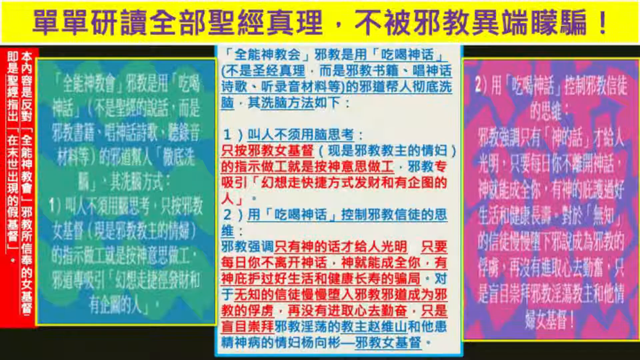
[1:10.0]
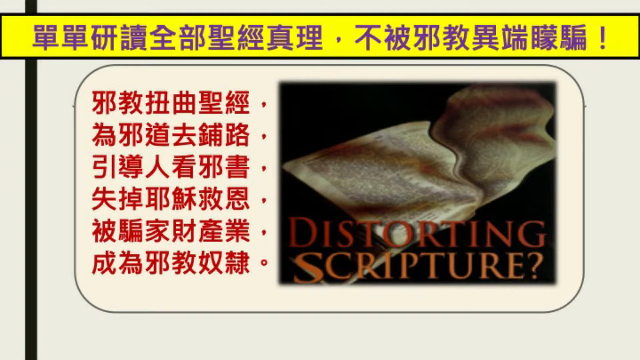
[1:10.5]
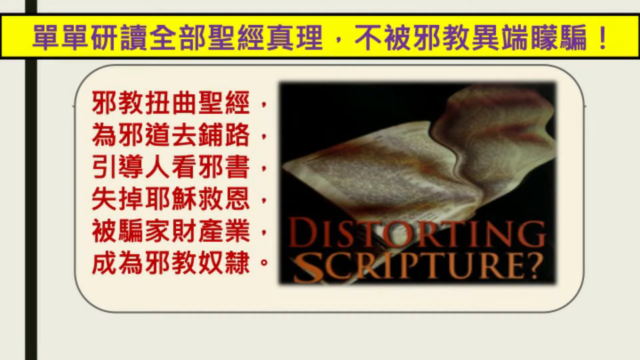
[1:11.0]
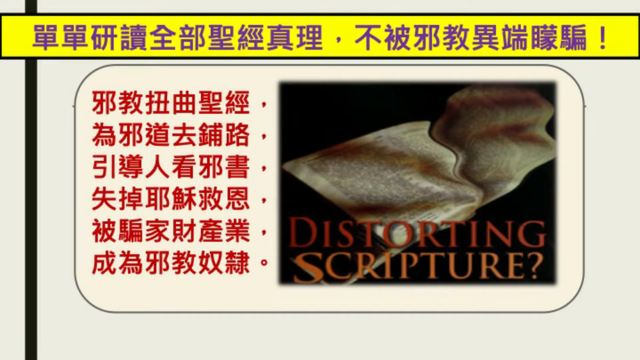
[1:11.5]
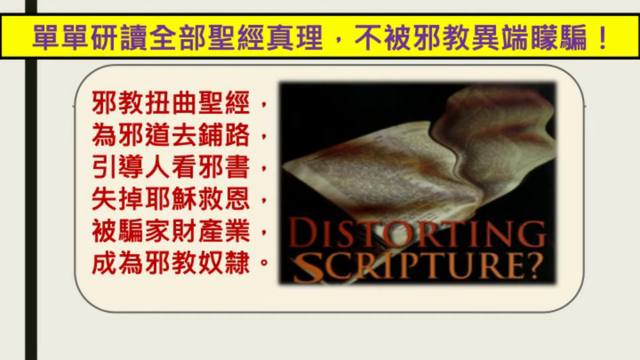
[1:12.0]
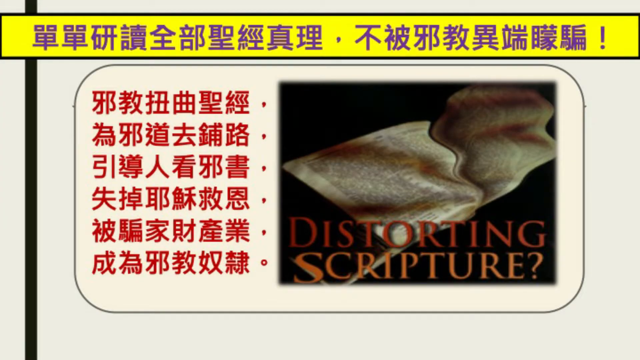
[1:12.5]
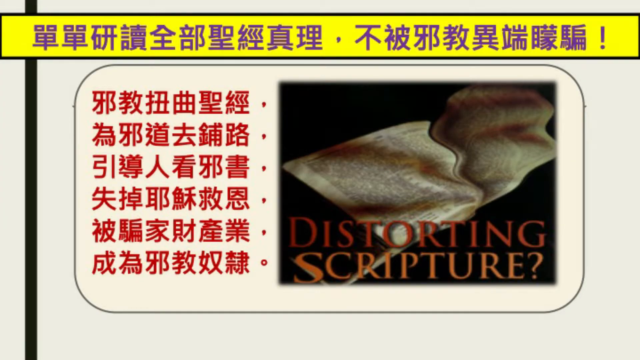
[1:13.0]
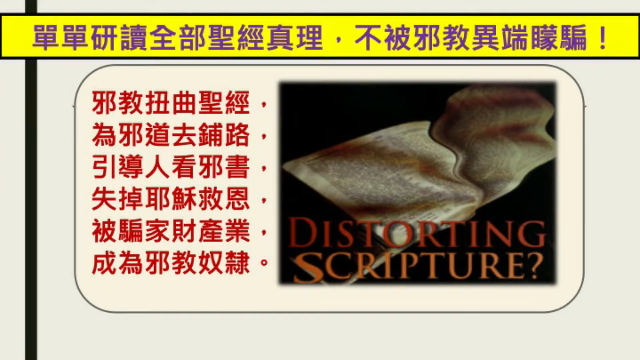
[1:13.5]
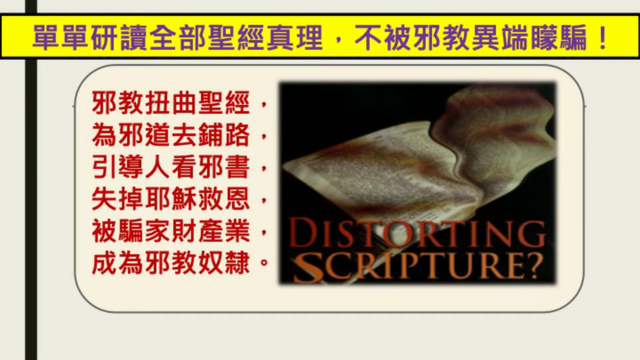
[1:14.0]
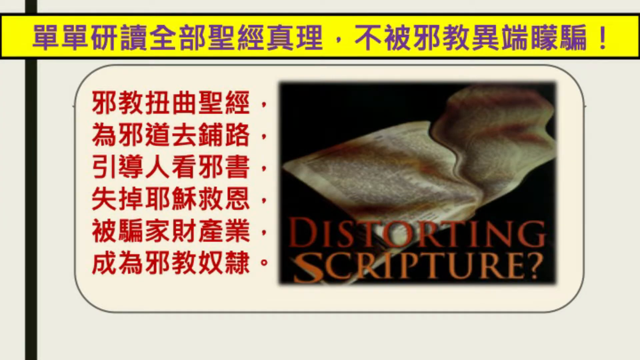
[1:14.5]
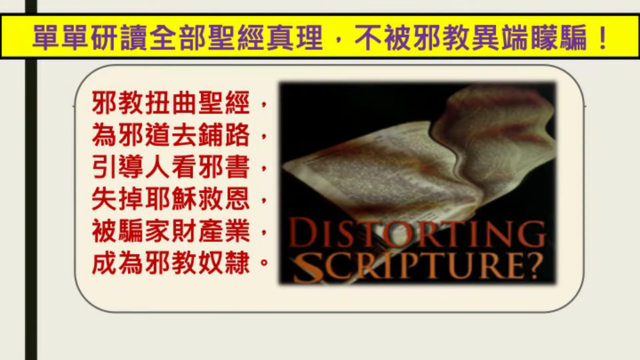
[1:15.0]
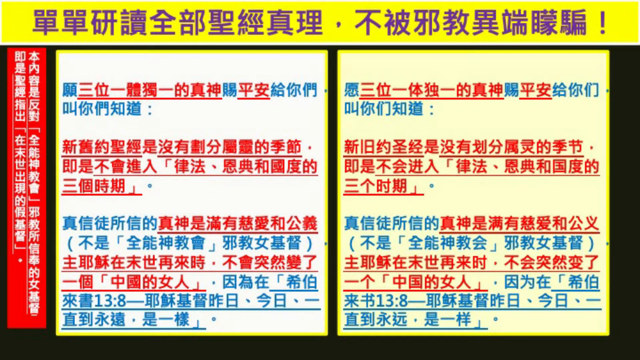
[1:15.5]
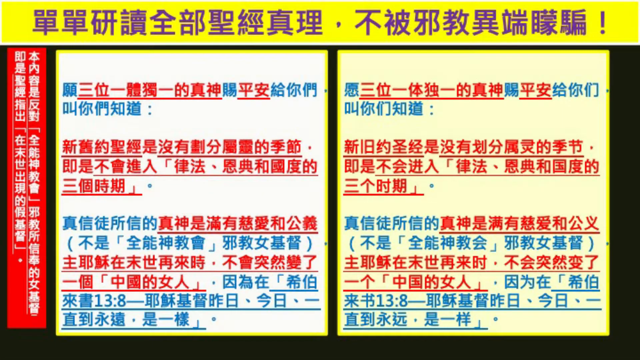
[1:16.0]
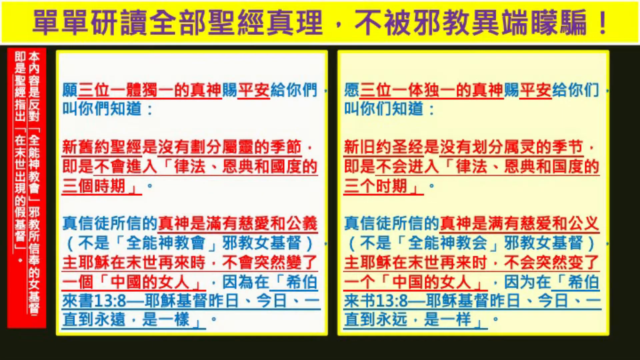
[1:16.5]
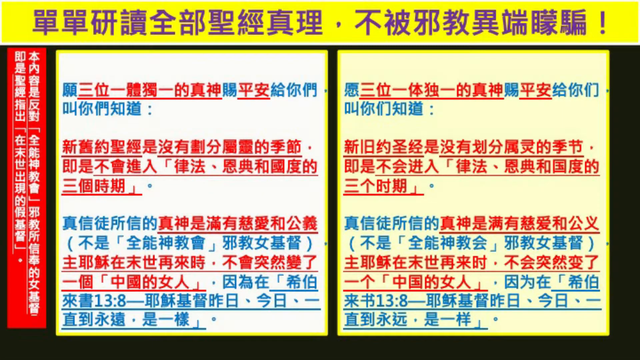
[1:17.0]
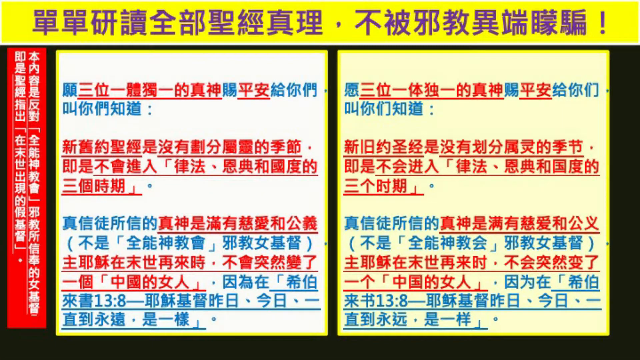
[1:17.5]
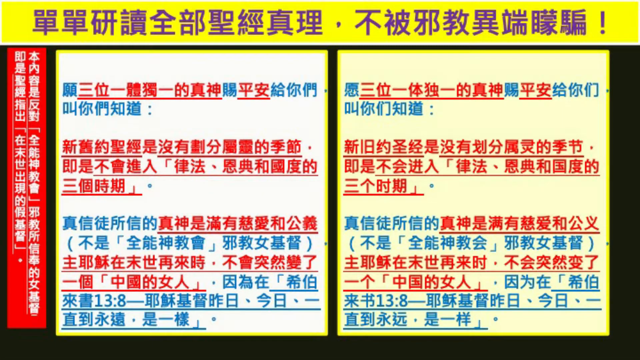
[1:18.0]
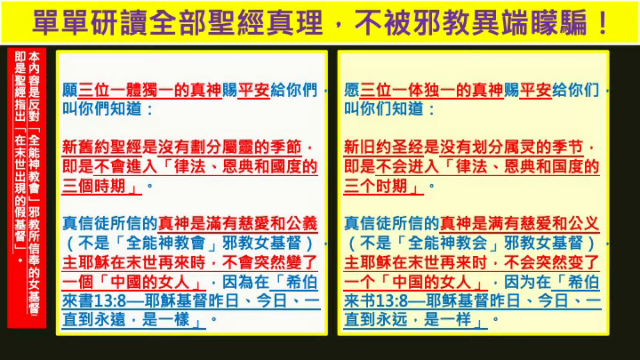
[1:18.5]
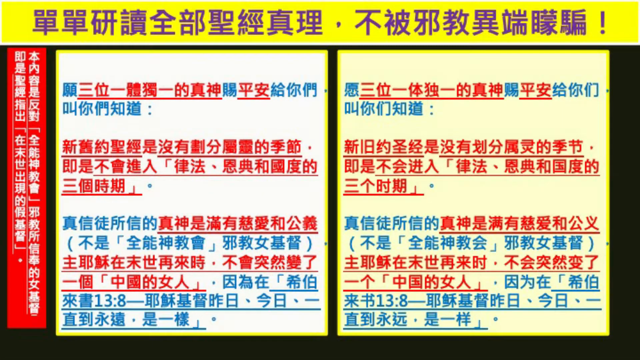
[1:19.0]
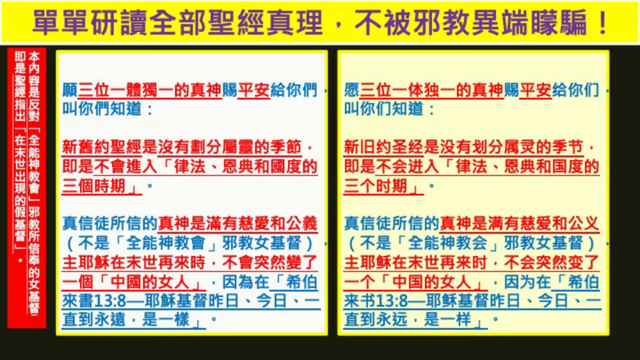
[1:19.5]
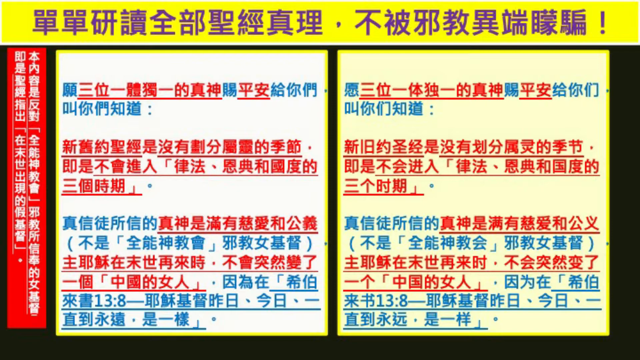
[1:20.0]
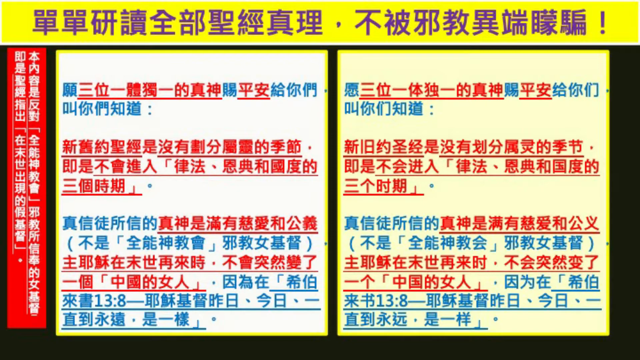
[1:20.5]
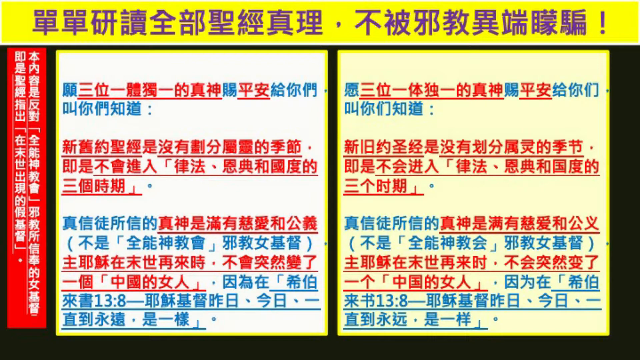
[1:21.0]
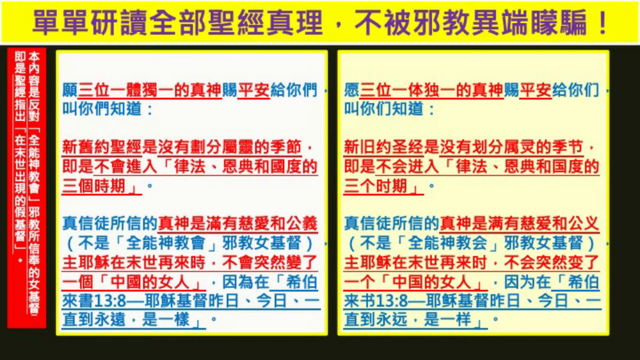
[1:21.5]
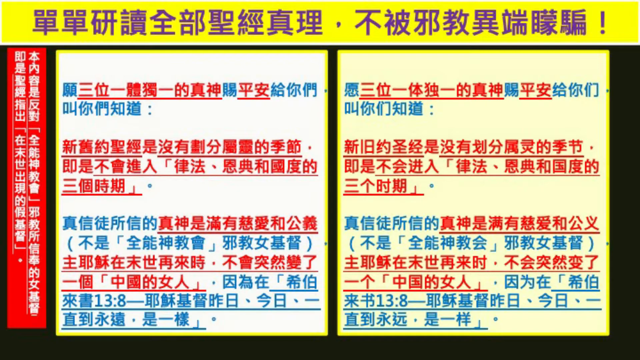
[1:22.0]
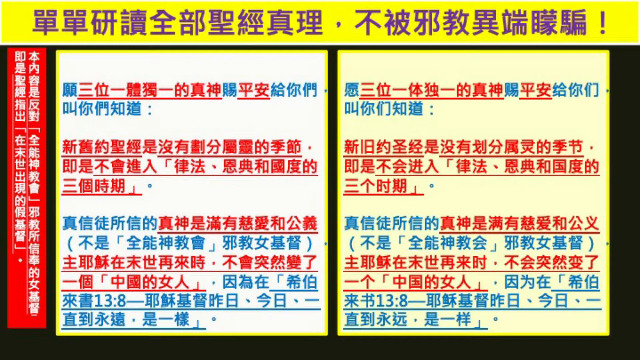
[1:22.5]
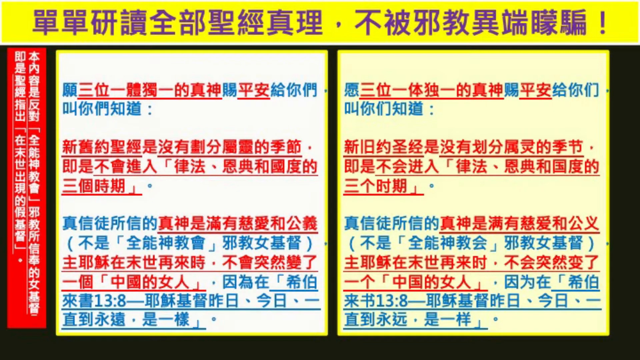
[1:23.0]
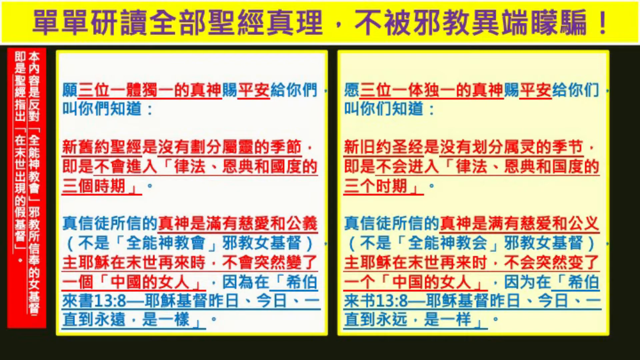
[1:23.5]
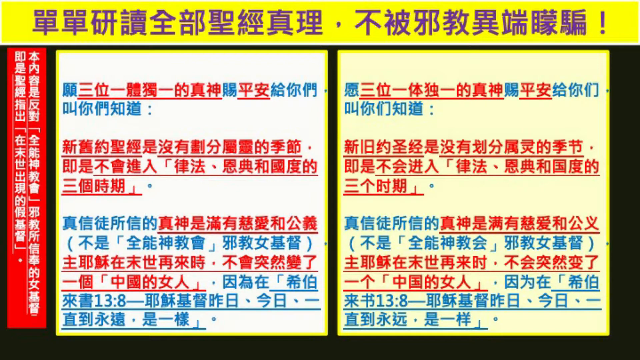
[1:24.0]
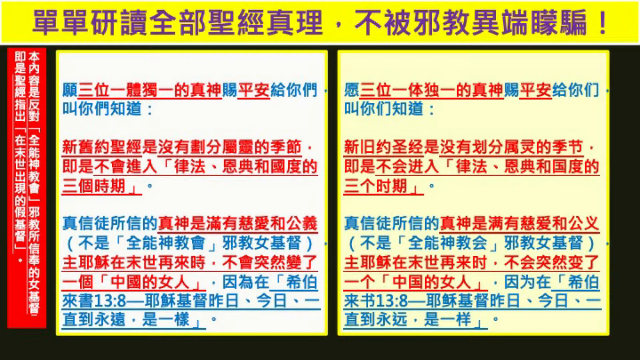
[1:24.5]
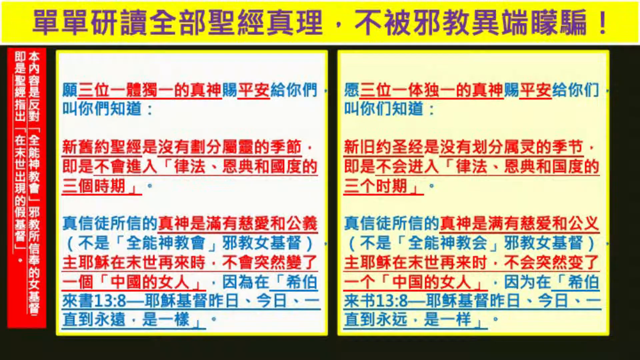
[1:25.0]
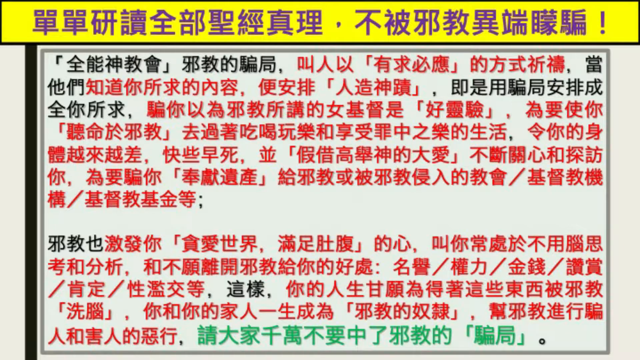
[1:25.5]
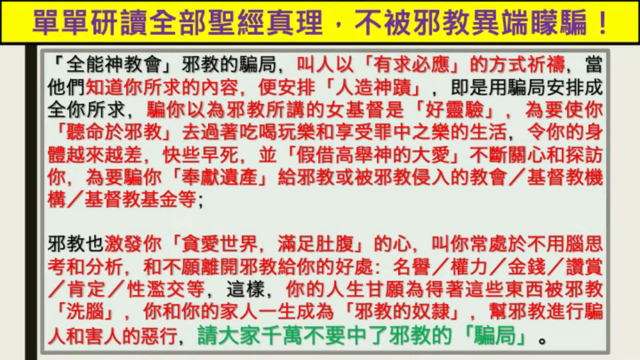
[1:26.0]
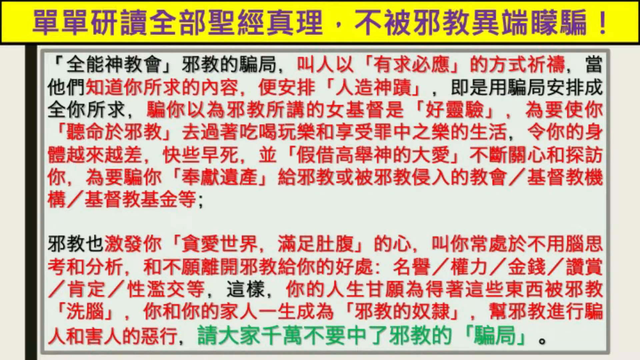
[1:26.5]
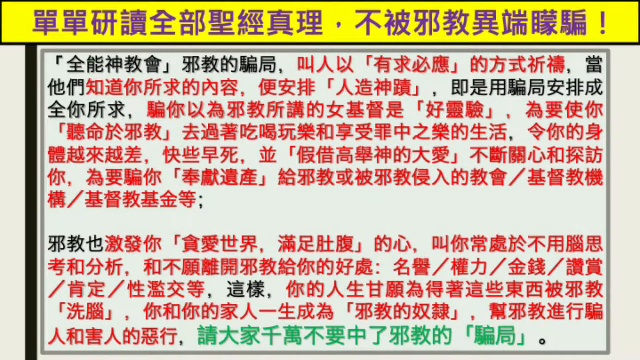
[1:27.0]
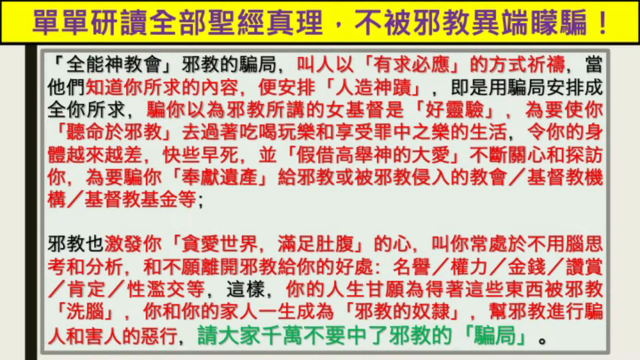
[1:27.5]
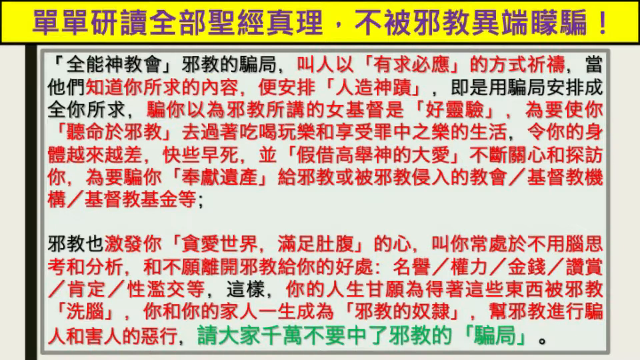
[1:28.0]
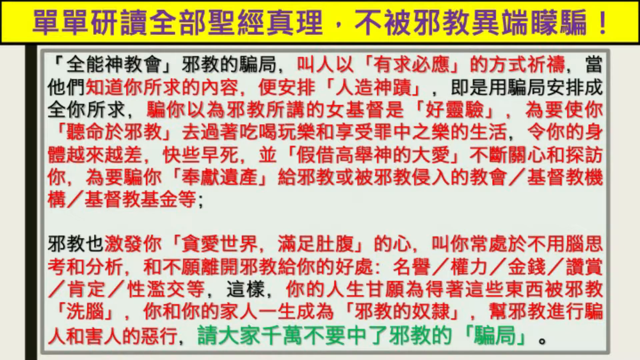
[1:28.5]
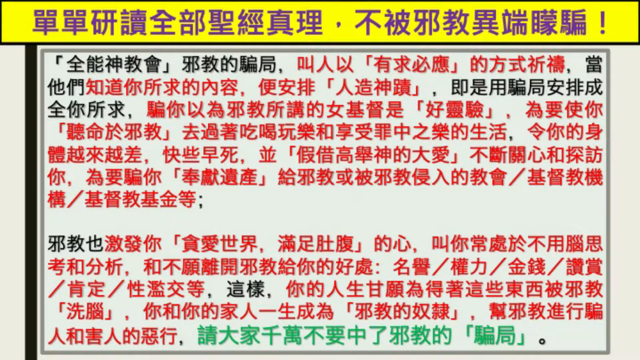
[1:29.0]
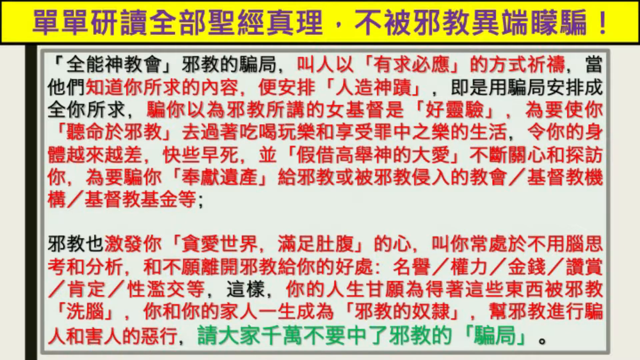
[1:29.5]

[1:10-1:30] A page has a yellow banner across the top with purple lettering. Beneath it is a white rectangle with red lettering, and to its right is a black background with the open Bible and the words "distorting scripture" in red and orange lettering. The next page shows two screens: the yellow banner with purple on top, two red banners with white lettering going down on the left, a white background with red and blue lettering, and to the right of that a yellow background with blue and red lettering; both have yellow backgrounds in them. Then a page with black and red writing appears. Both have yellow around the frame of the page.